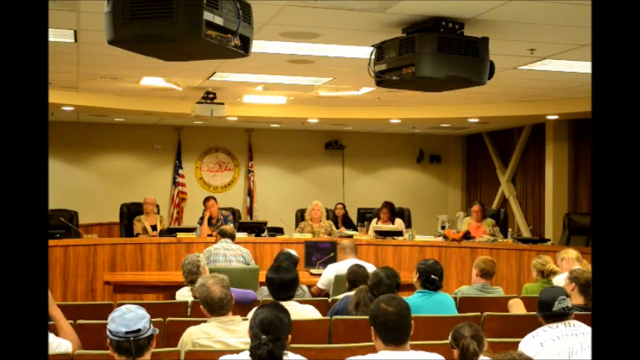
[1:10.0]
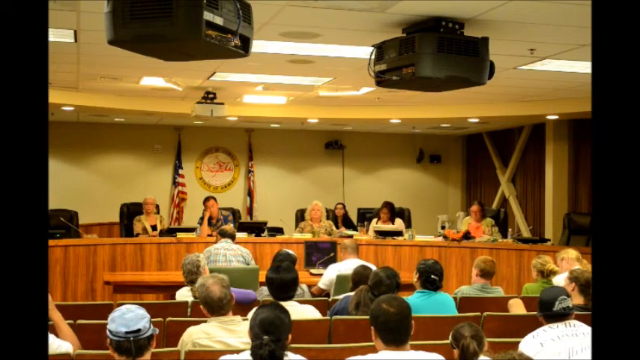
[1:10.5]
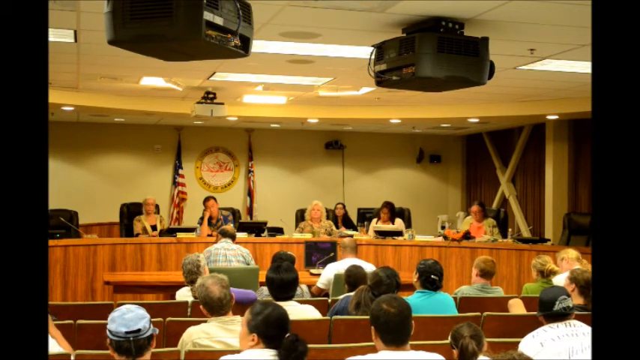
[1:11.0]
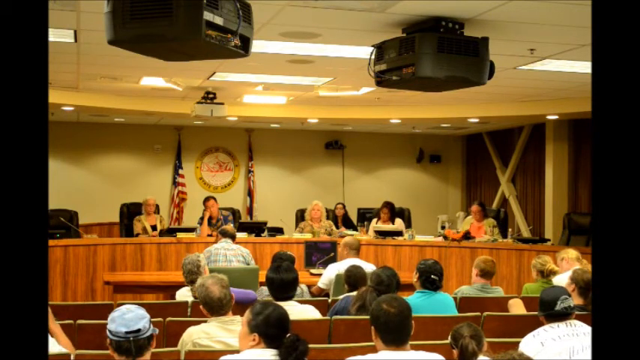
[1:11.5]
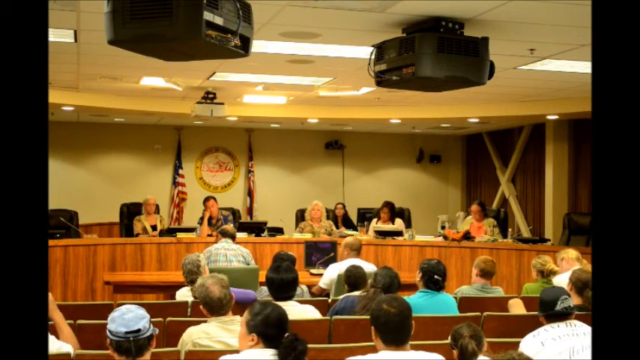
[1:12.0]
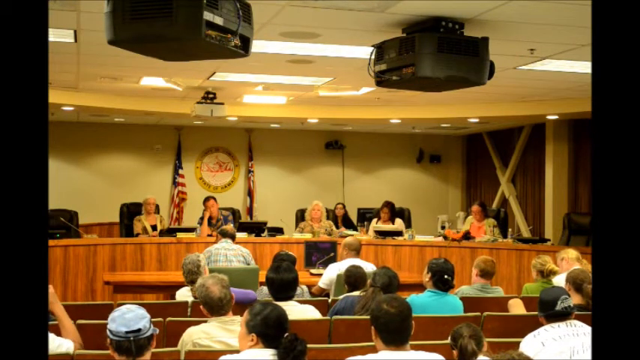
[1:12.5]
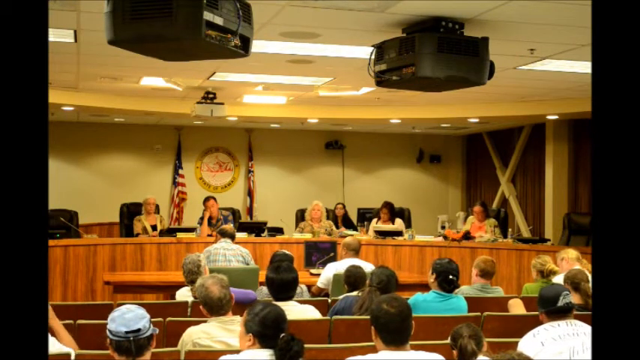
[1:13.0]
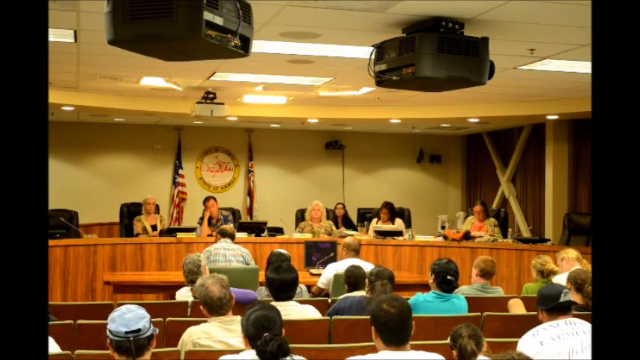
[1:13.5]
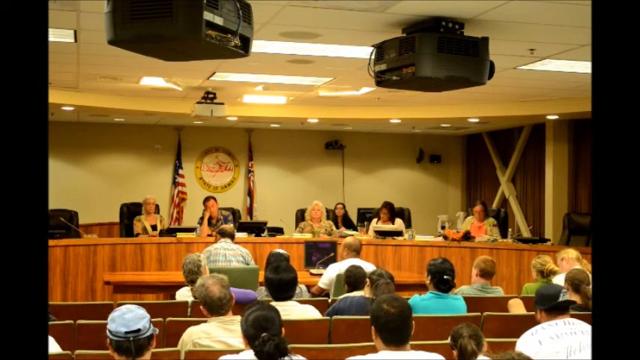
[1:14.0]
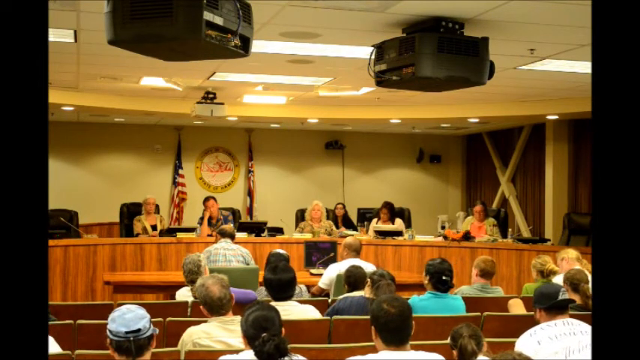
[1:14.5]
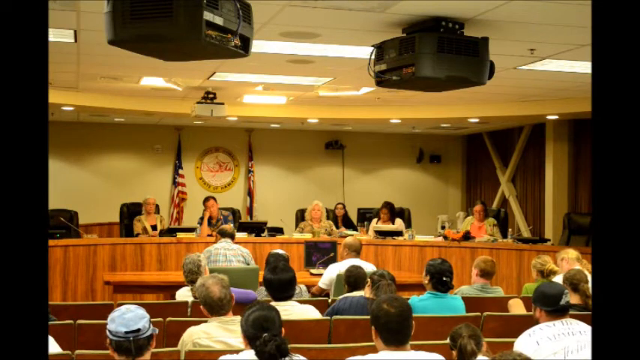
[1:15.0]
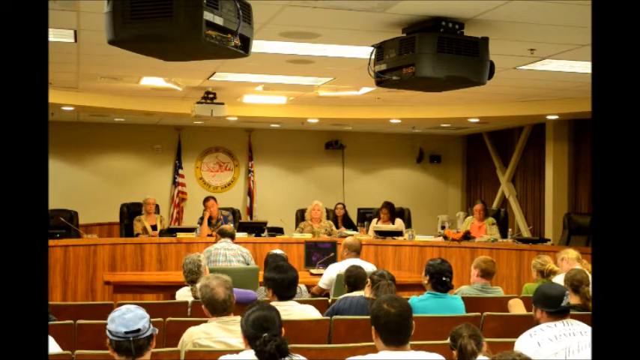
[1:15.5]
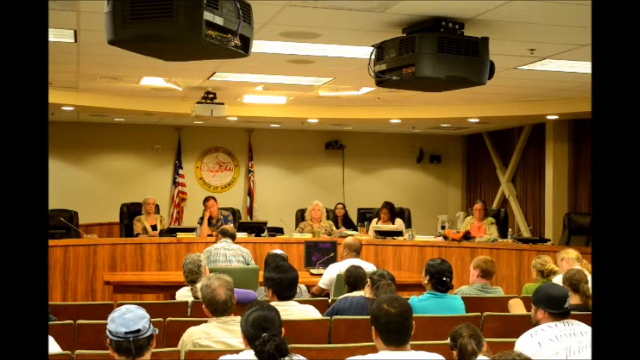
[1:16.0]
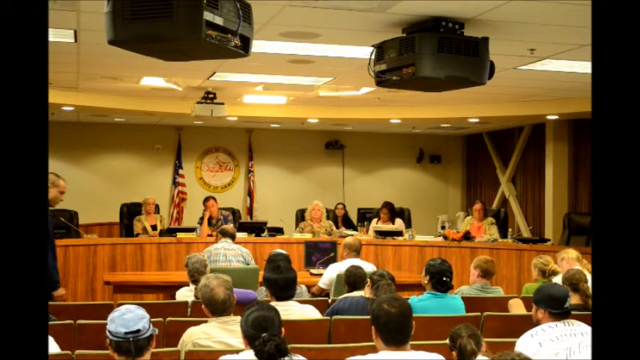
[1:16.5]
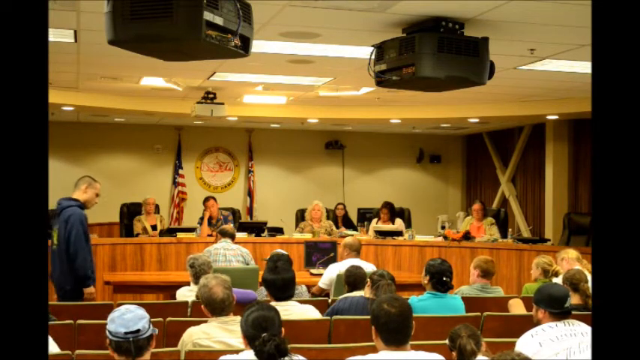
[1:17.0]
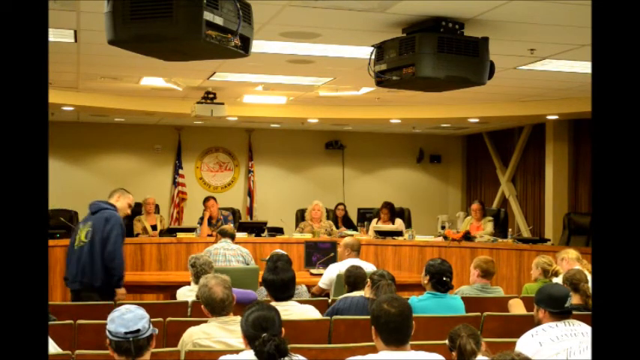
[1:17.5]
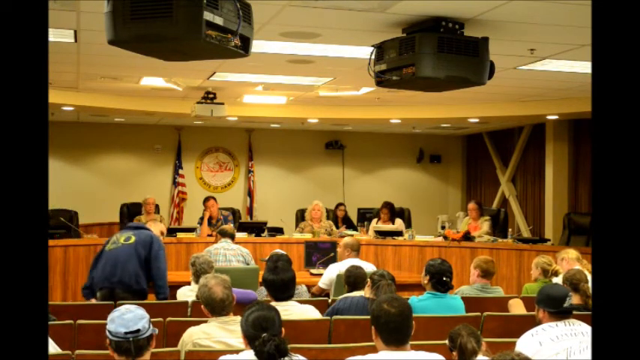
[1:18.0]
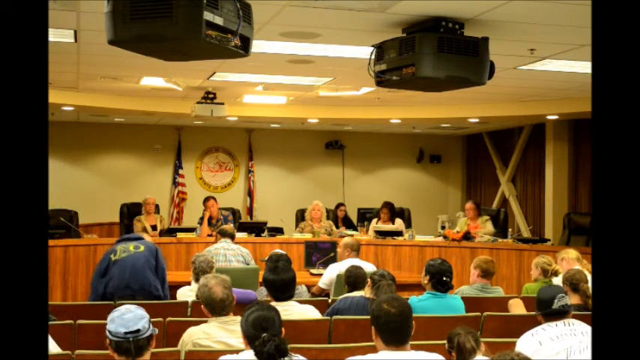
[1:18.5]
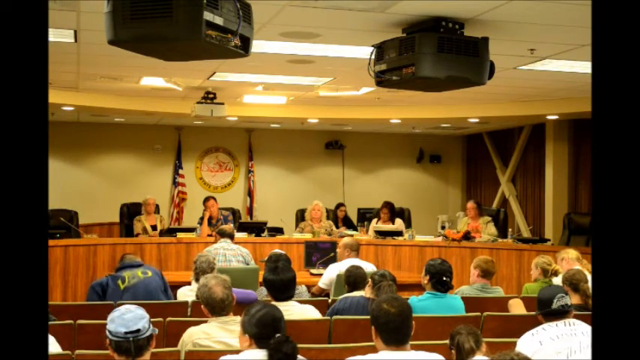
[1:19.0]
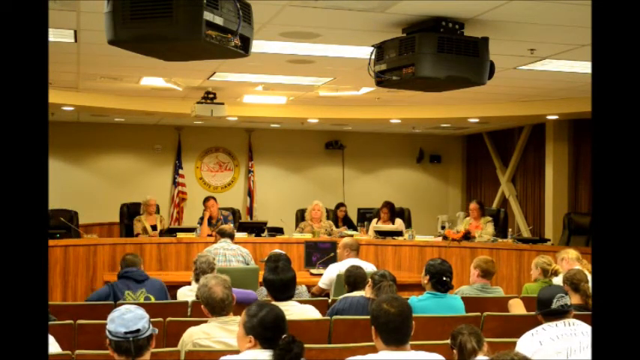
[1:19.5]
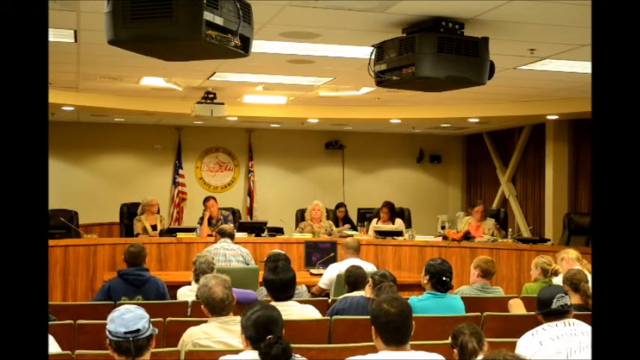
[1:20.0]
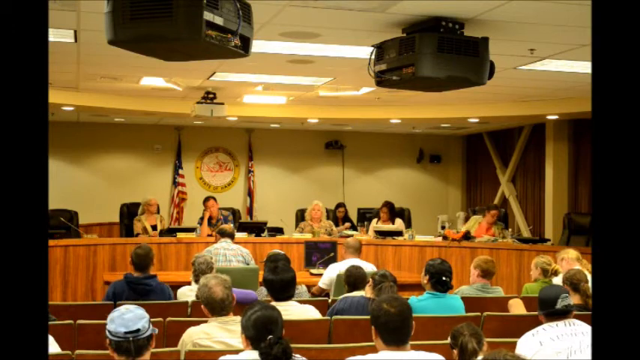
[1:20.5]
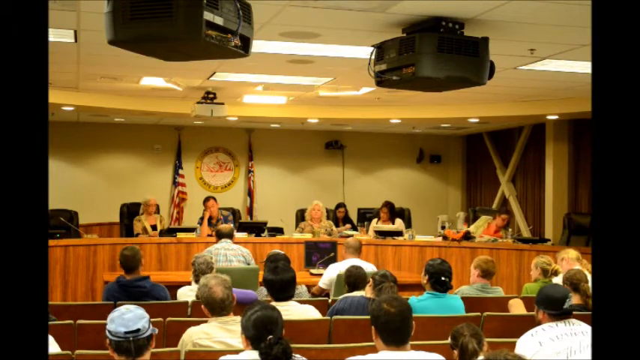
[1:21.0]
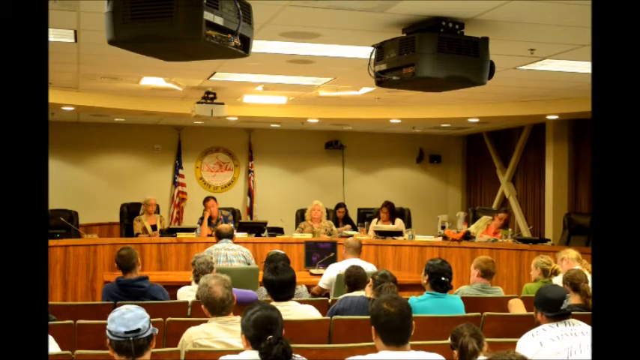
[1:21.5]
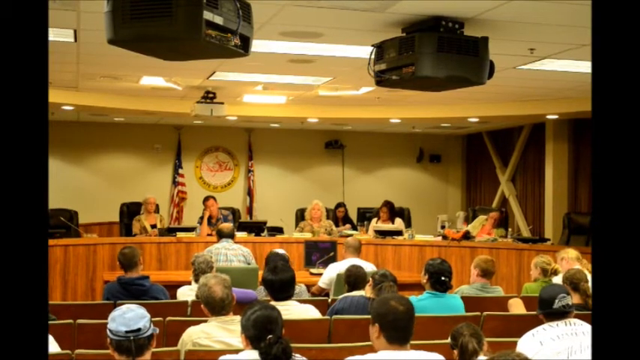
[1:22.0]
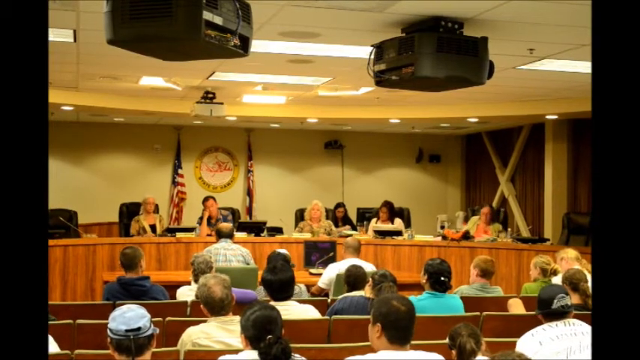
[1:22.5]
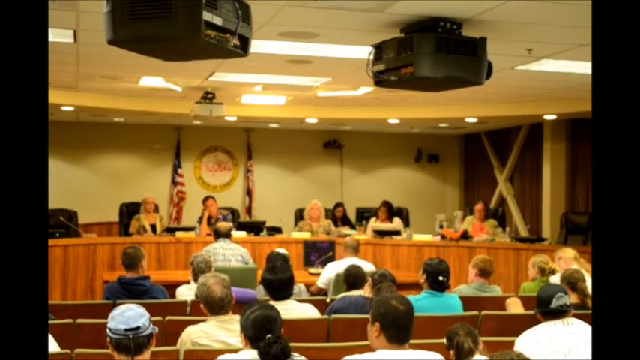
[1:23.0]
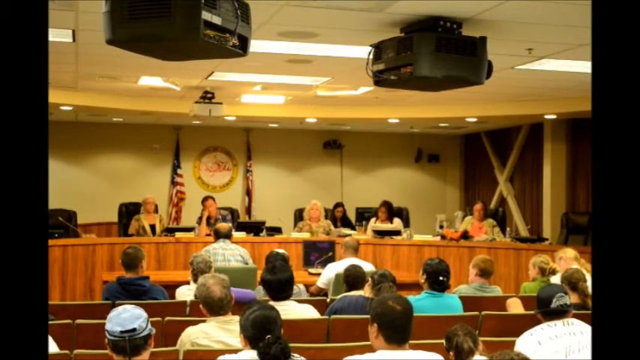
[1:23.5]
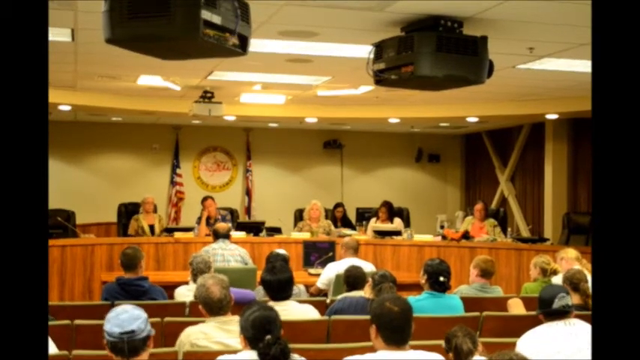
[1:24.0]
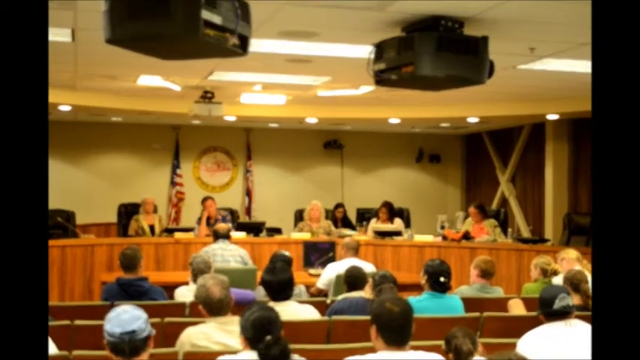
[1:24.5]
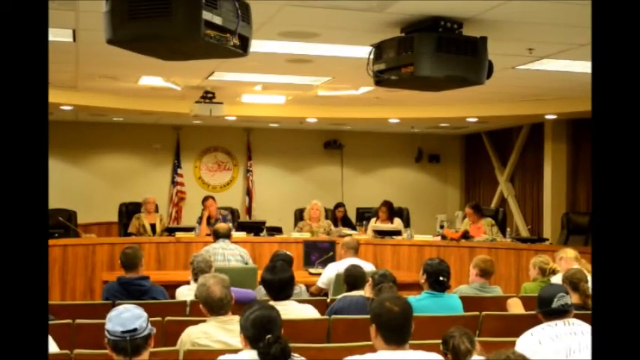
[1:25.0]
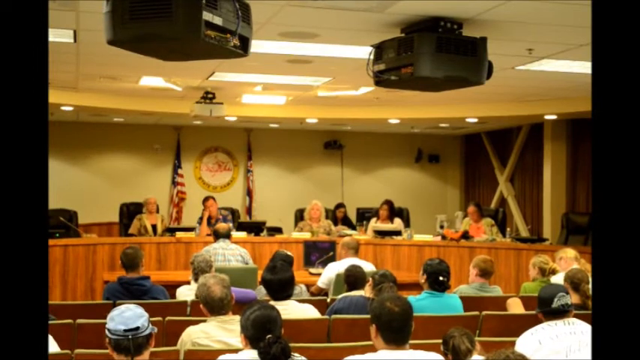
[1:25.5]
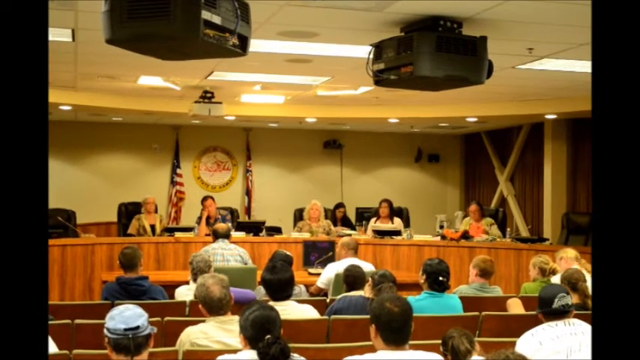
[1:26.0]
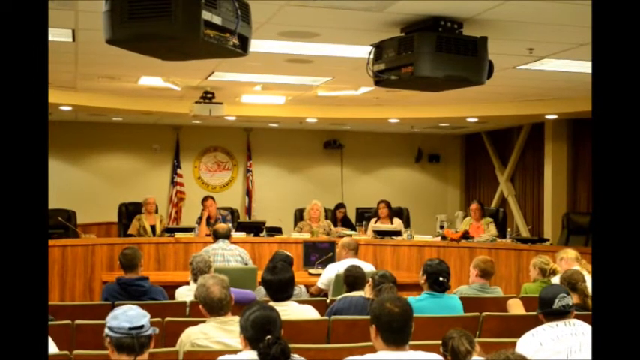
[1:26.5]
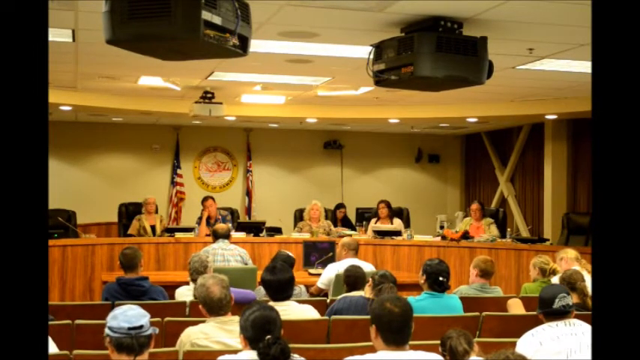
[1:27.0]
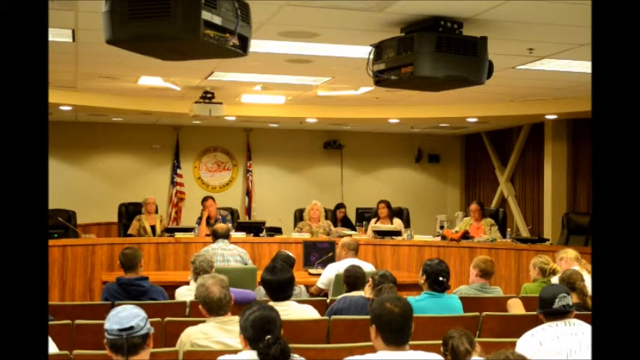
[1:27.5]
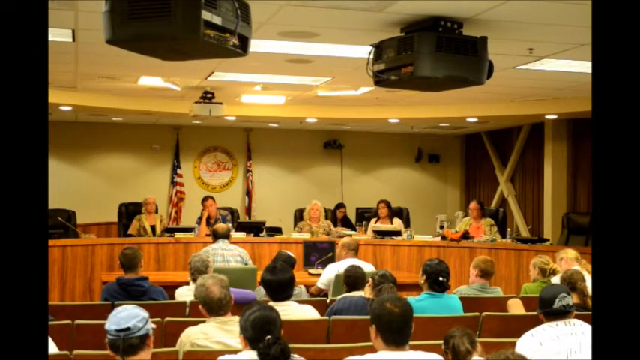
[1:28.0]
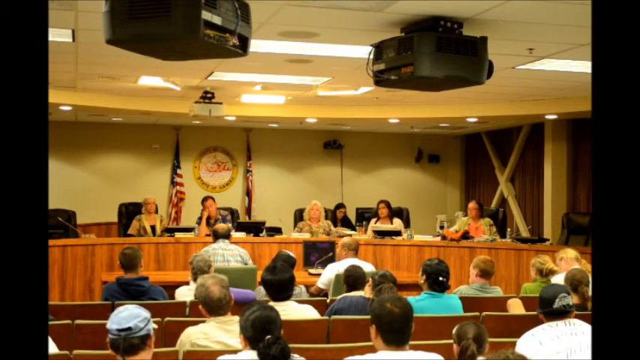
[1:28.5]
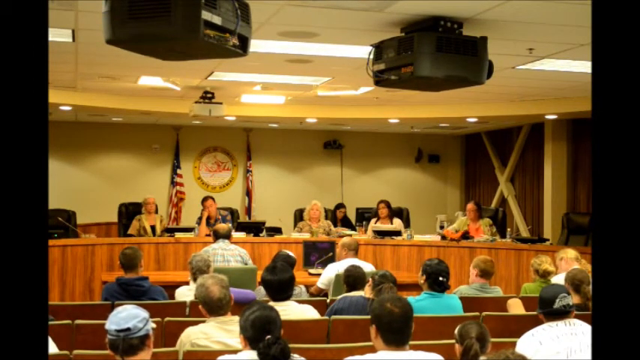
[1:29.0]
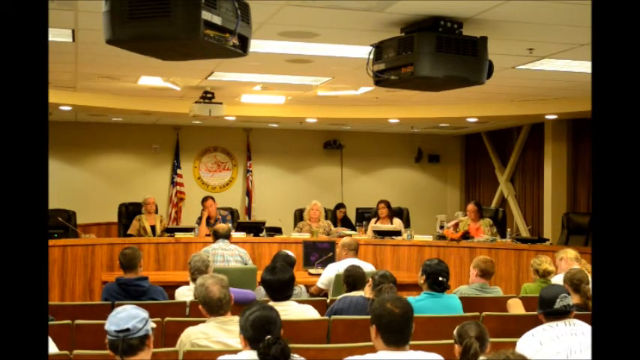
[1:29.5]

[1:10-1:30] The same room, people and audience remain in view. A man walks up and sits down; otherwise everything stays the same. No one raises their hand and no one else converses.